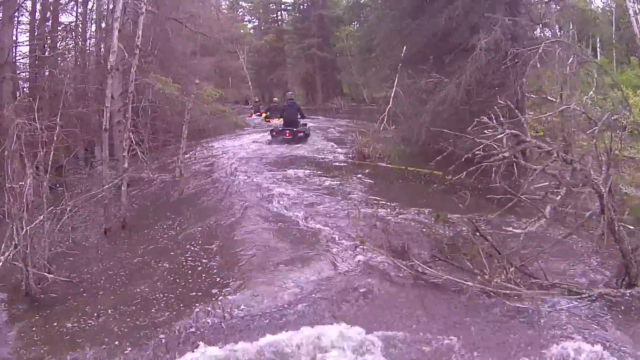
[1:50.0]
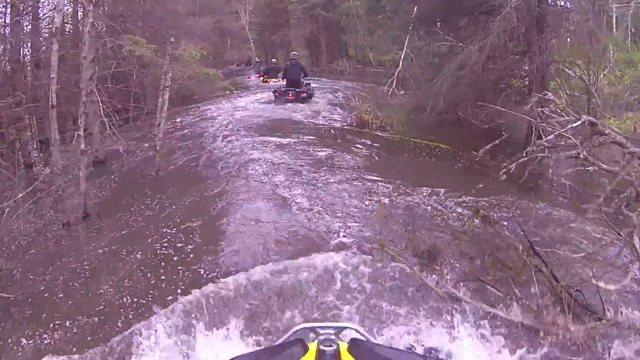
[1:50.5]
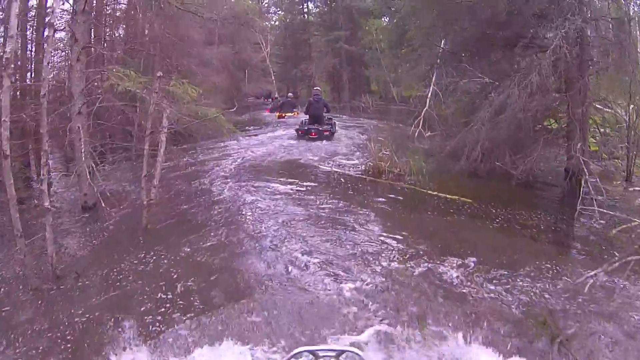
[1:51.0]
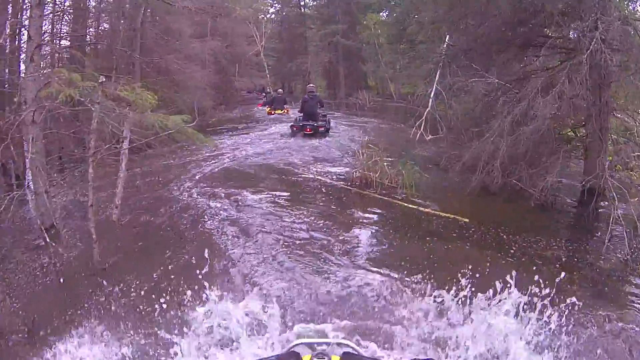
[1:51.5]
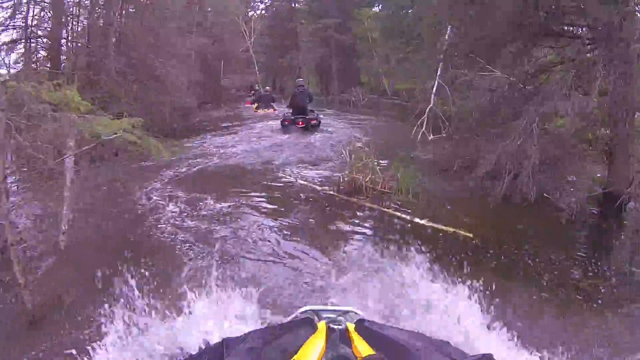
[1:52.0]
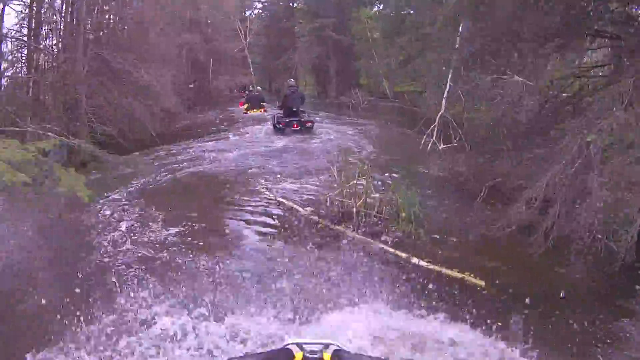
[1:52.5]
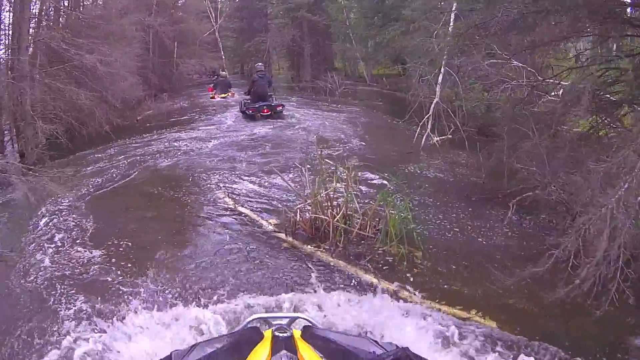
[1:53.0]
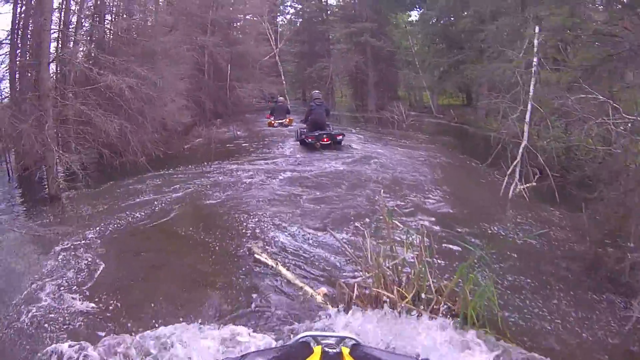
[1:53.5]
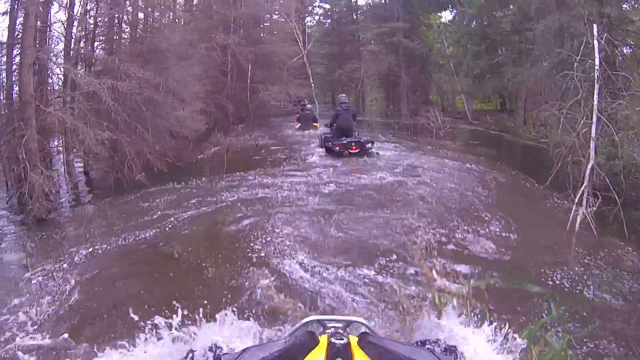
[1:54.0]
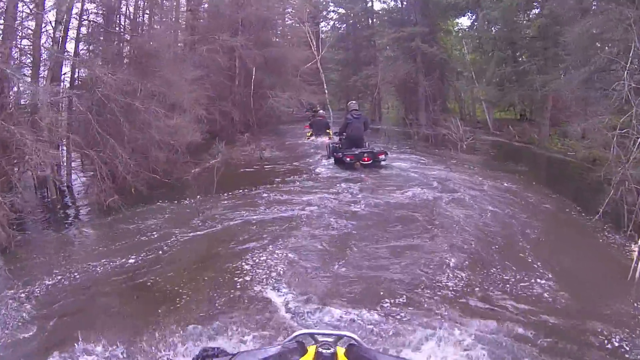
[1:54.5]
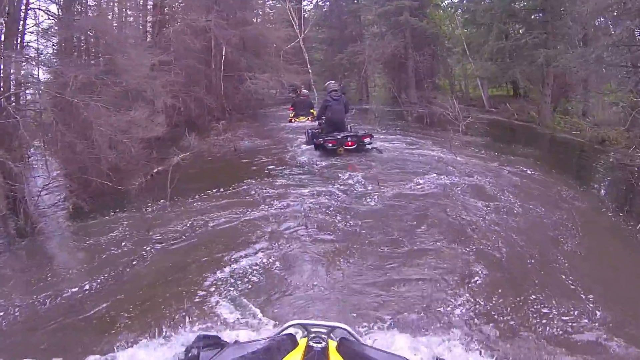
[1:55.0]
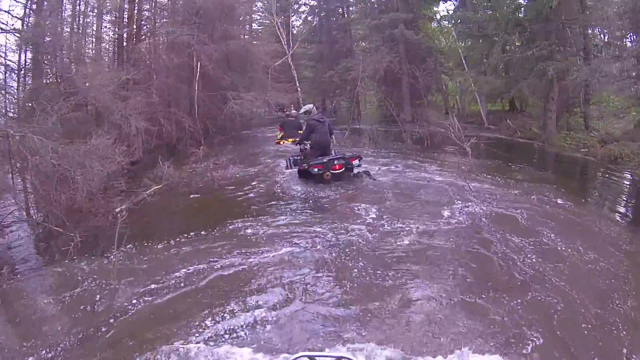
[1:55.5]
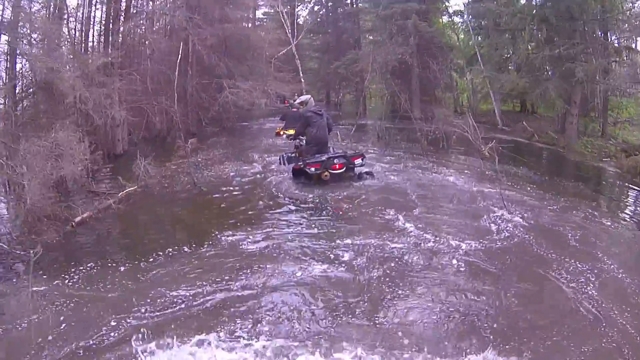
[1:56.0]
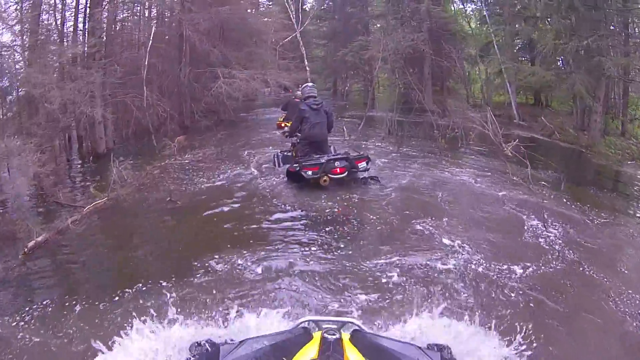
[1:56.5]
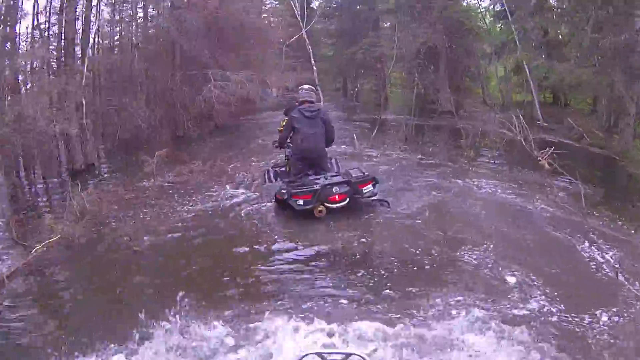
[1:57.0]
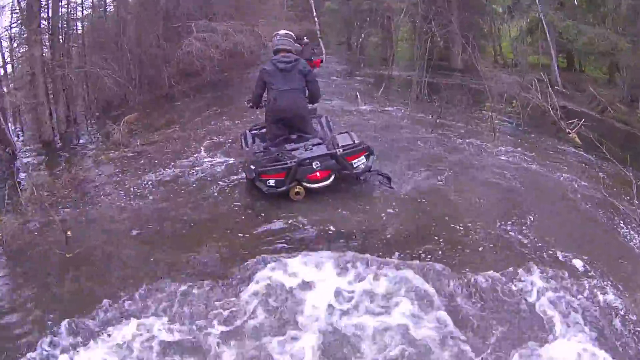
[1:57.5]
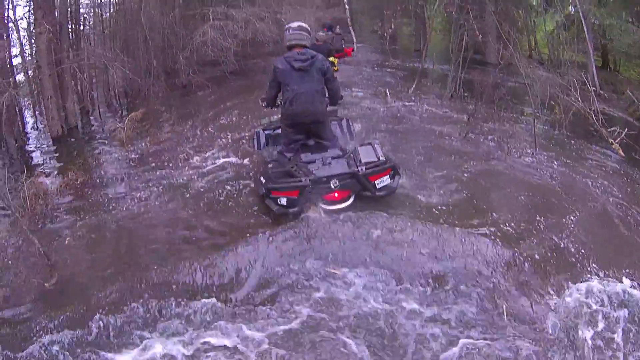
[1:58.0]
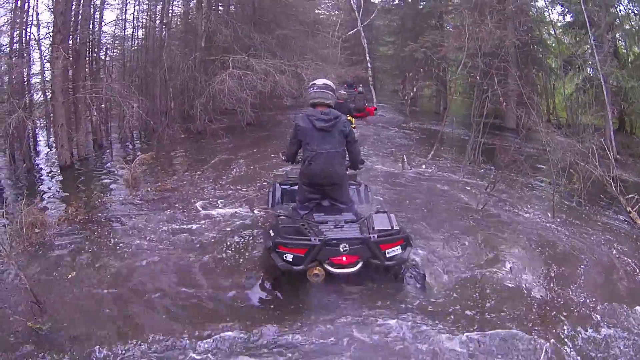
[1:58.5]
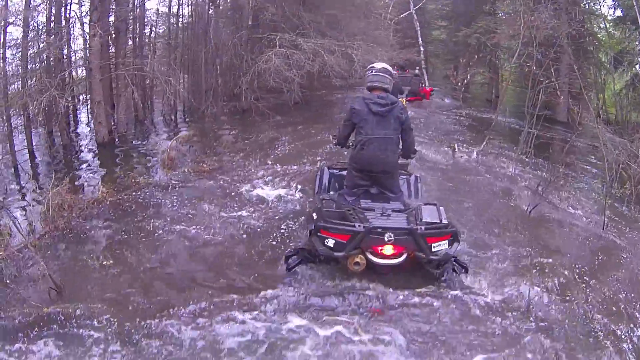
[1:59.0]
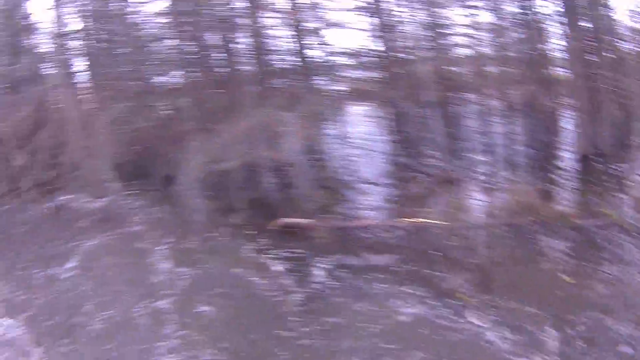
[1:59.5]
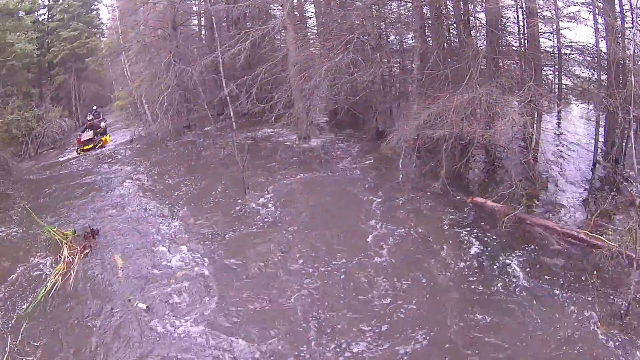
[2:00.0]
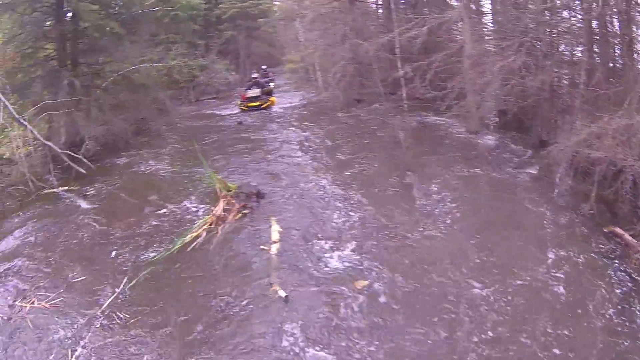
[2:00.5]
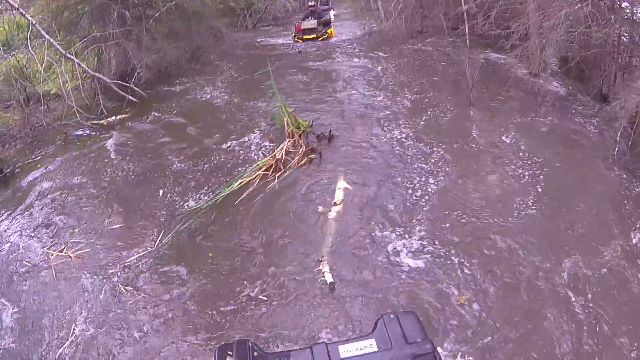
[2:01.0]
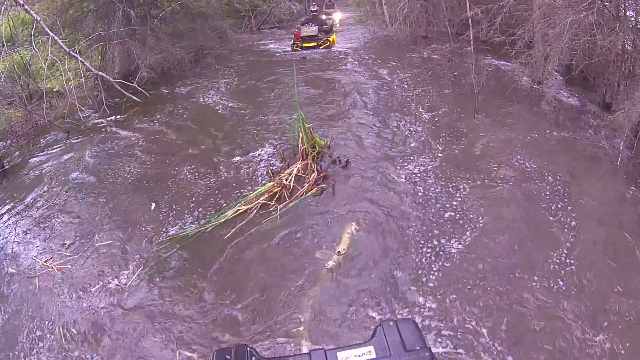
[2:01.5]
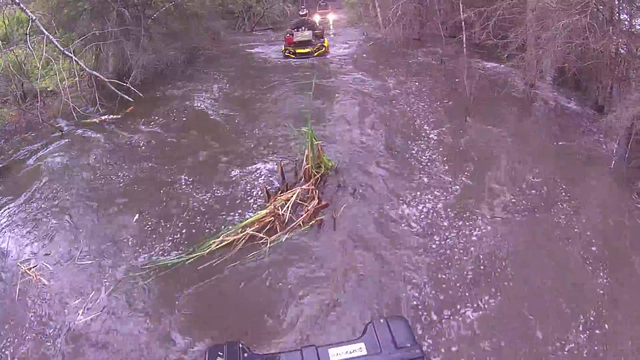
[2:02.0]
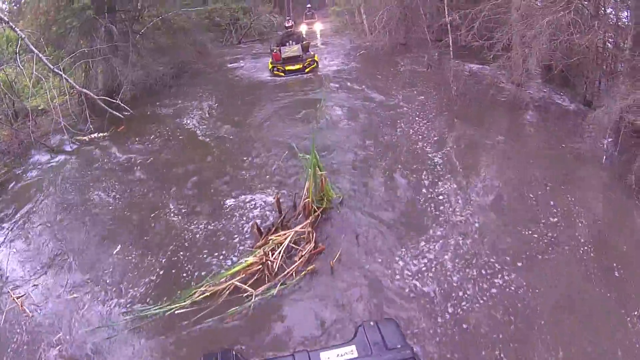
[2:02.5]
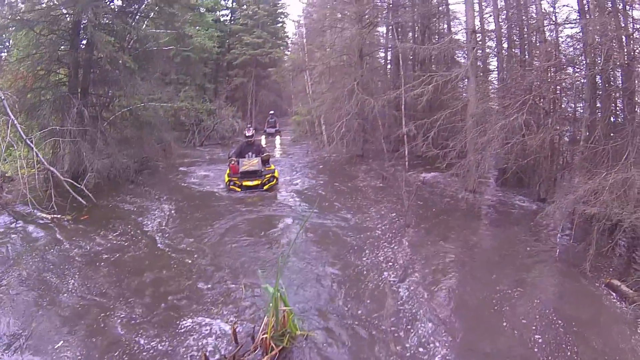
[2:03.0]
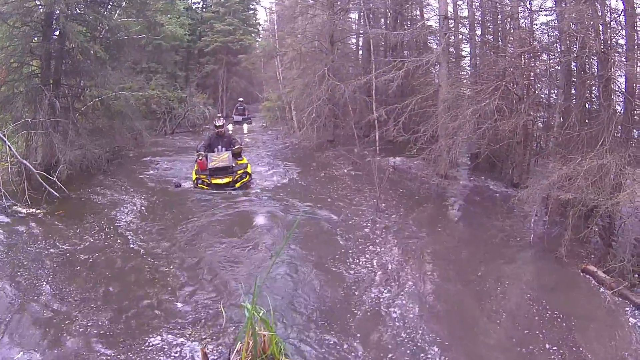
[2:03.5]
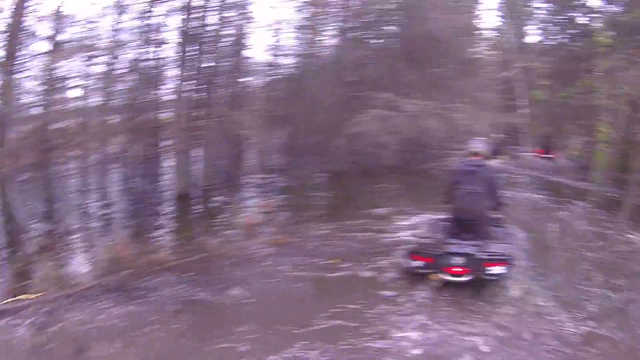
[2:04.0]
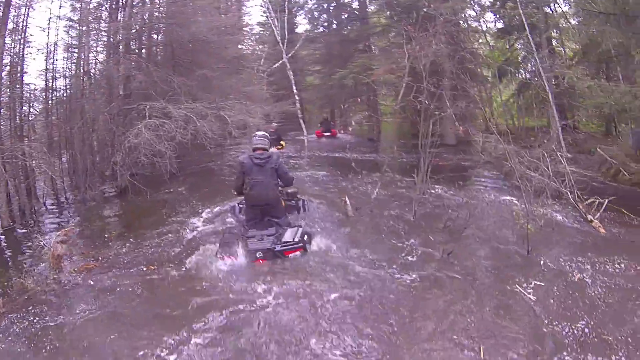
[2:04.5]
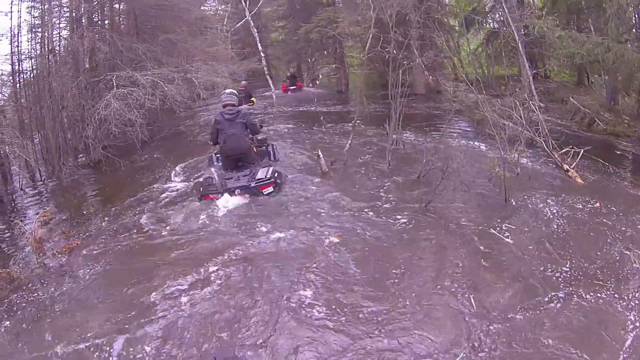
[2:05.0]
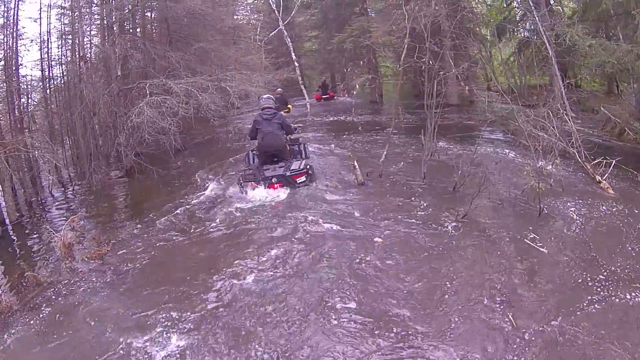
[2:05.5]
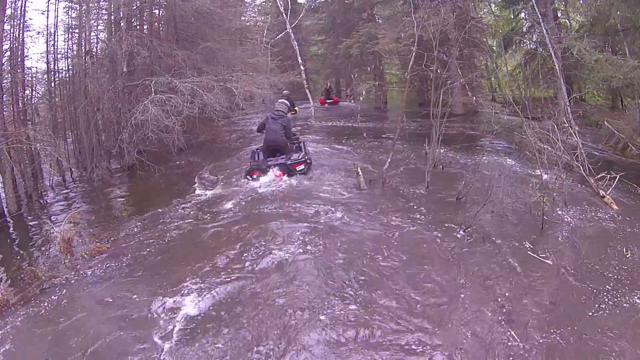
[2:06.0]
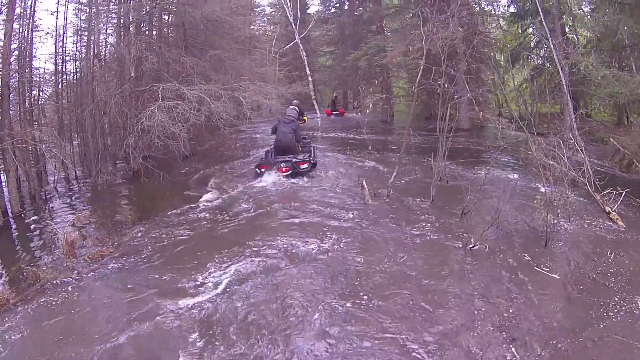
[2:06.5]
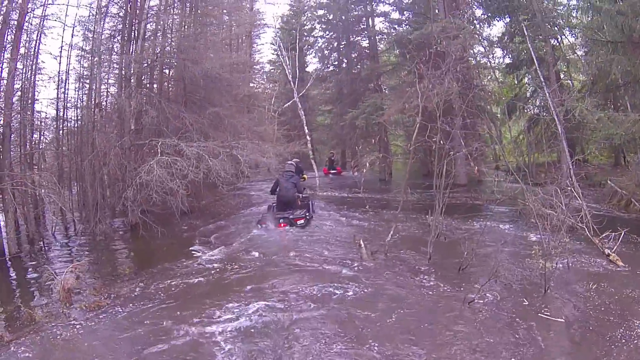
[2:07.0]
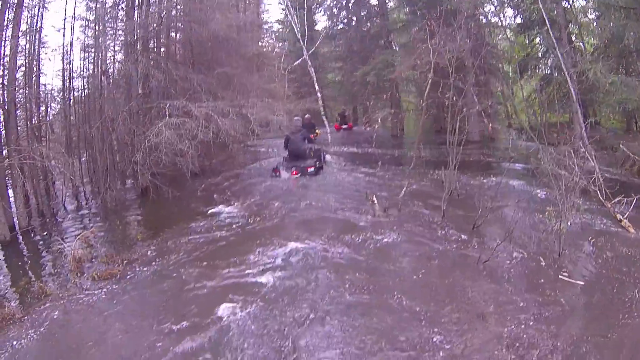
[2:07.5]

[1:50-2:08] The colors change slightly and look maybe a little lighter; it is probably the same spot and seems to be one continuous shot. The person filming appears to have gotten out of his spot. Big logs and branches are still in the way, and it almost looks like a ride. The guy in front of him completely stops in a whirlpool section and spins around; the person filming stops, and they are both bunched up against each other. When the person filming turns his little boat around, at least two more people are visible behind them. The view behind is really sloshy, with huge branches and leaves coming at them. It looks like they are possibly doing some kind of search and rescue. The two behind them gradually come closer and closer.